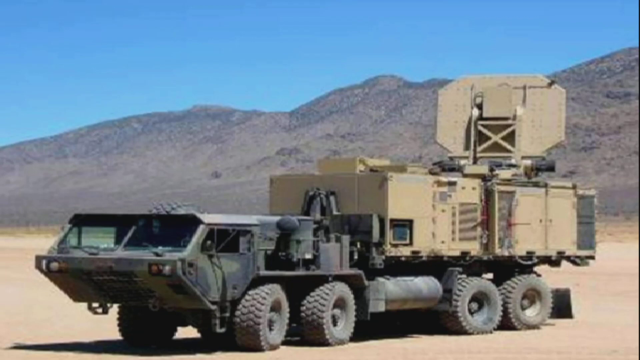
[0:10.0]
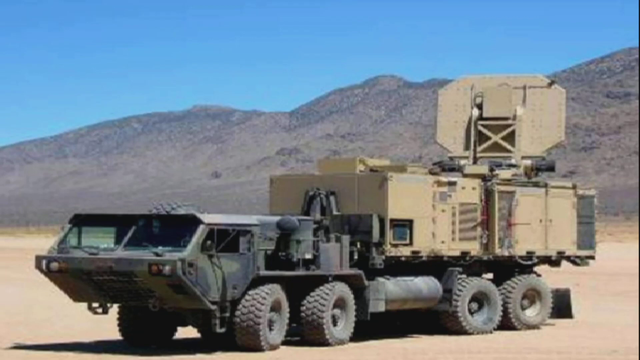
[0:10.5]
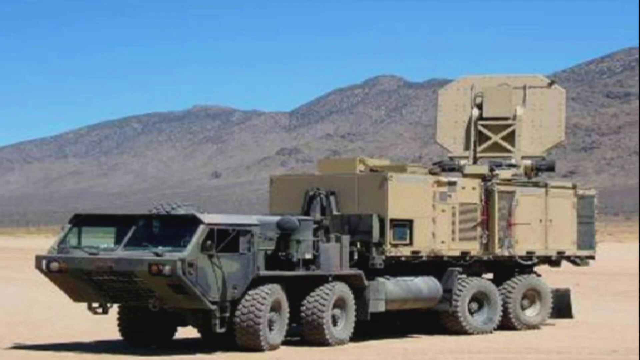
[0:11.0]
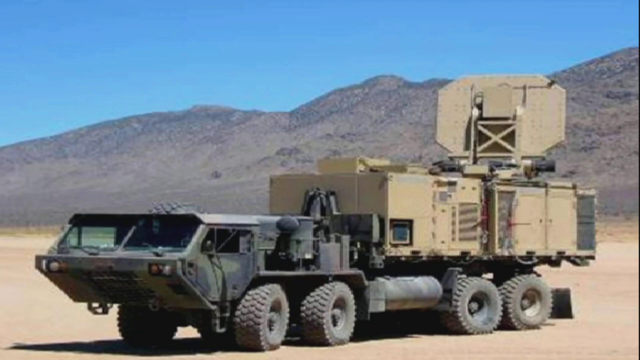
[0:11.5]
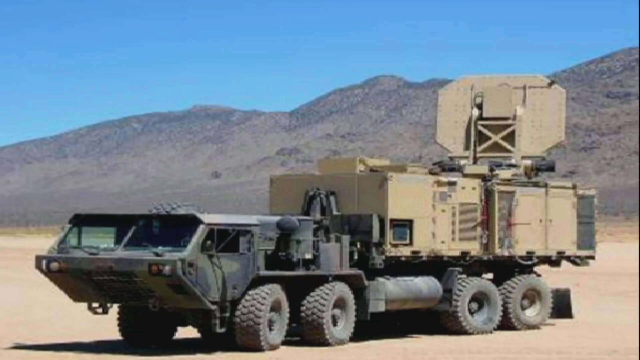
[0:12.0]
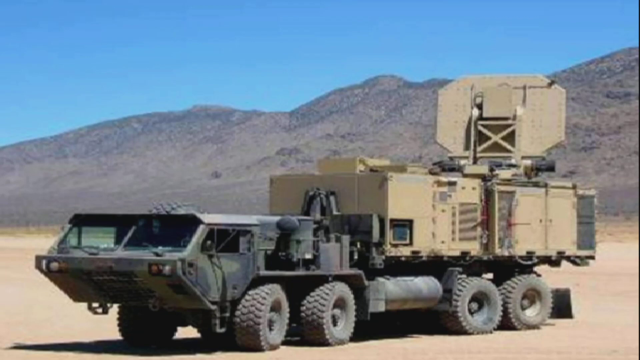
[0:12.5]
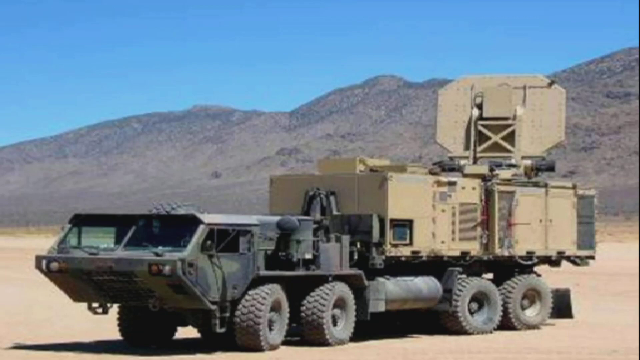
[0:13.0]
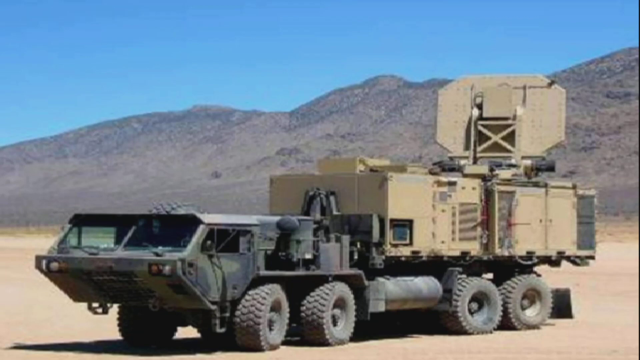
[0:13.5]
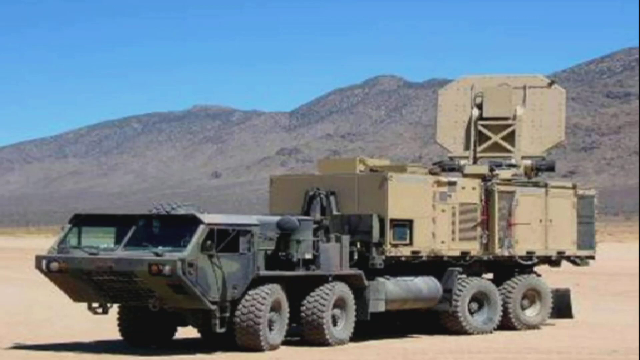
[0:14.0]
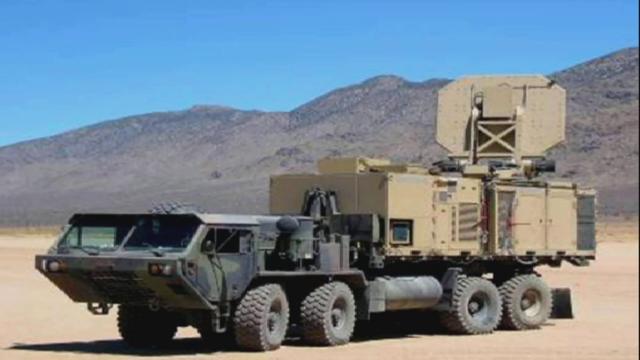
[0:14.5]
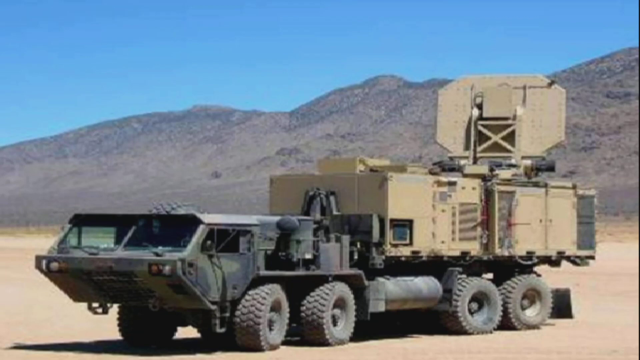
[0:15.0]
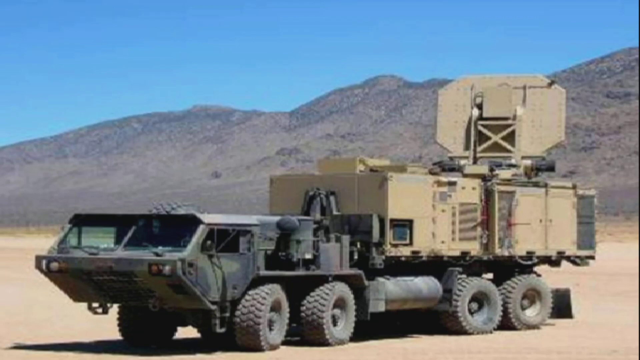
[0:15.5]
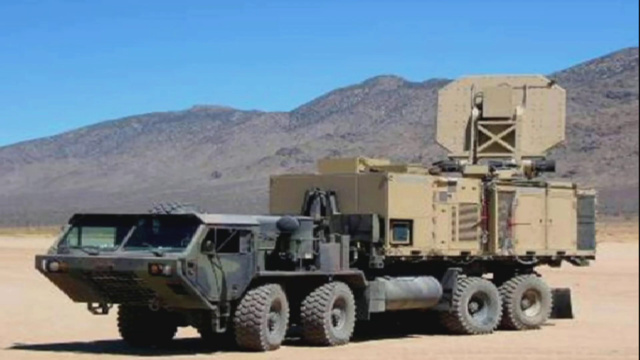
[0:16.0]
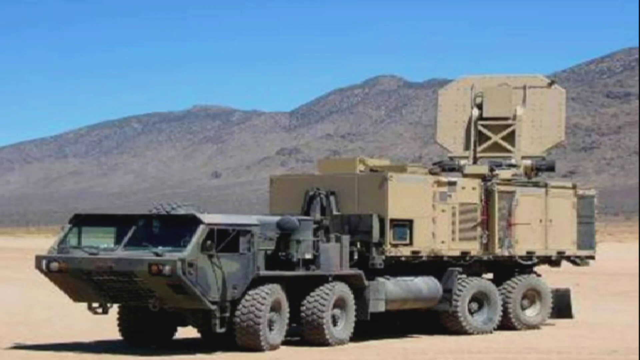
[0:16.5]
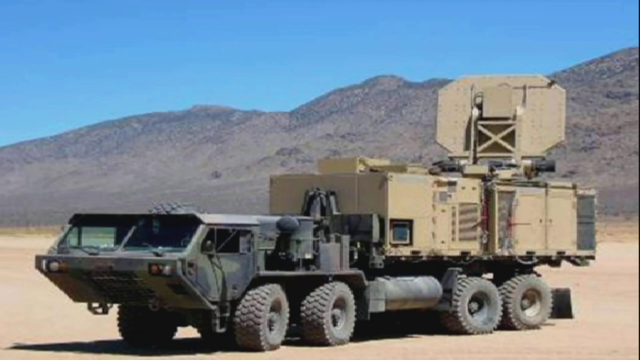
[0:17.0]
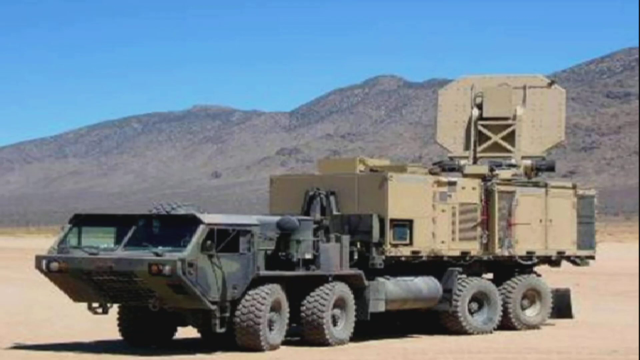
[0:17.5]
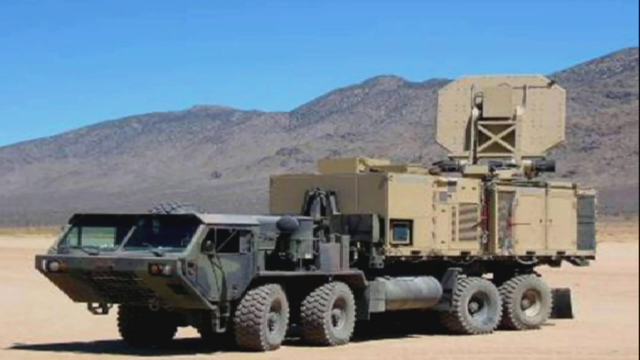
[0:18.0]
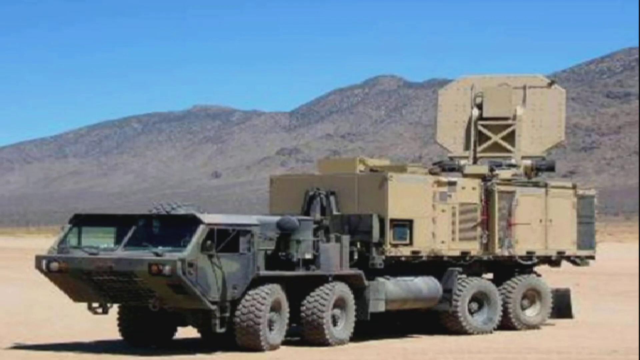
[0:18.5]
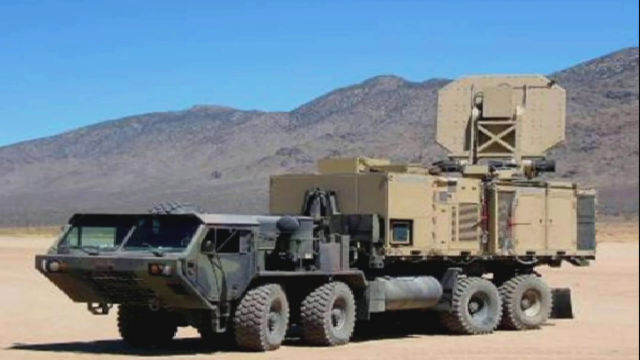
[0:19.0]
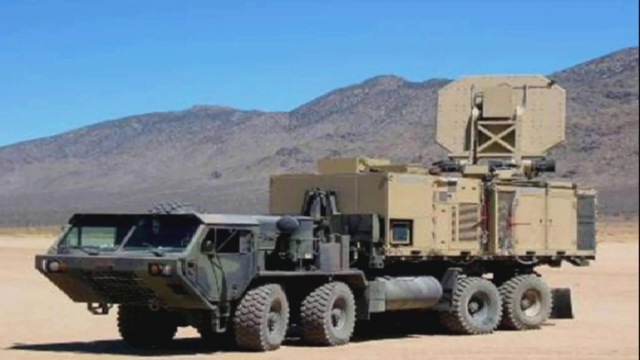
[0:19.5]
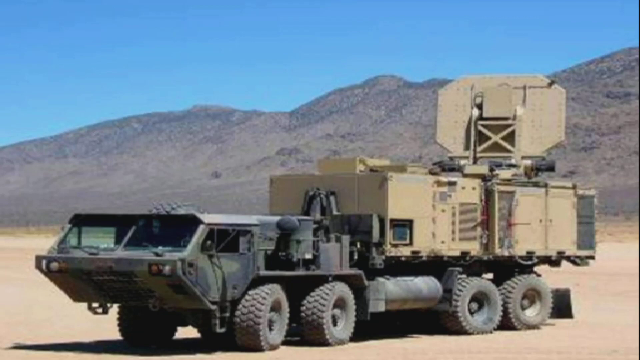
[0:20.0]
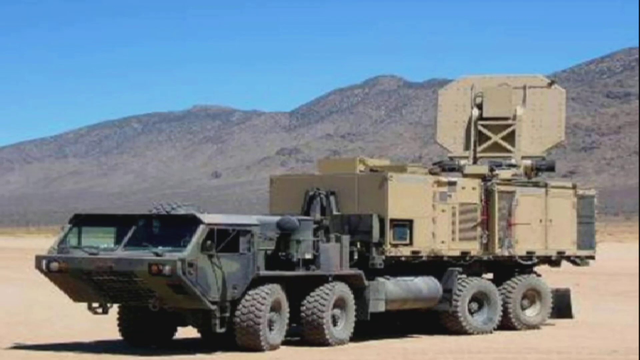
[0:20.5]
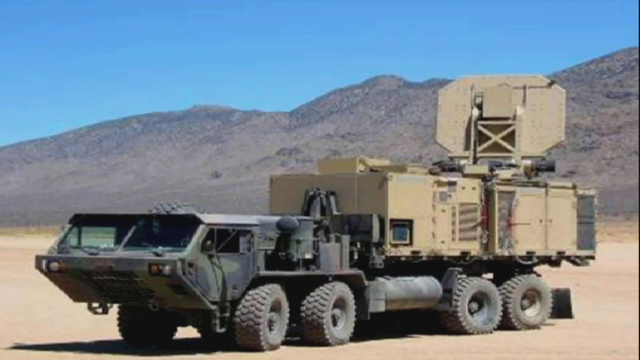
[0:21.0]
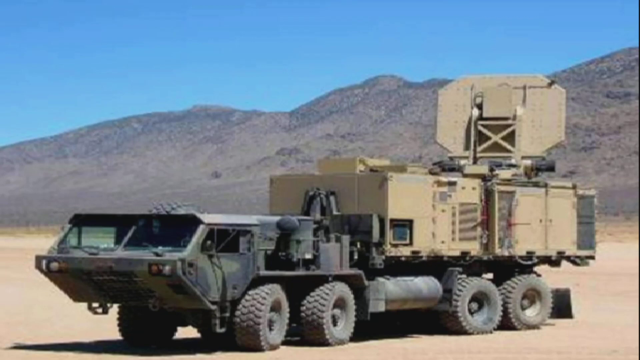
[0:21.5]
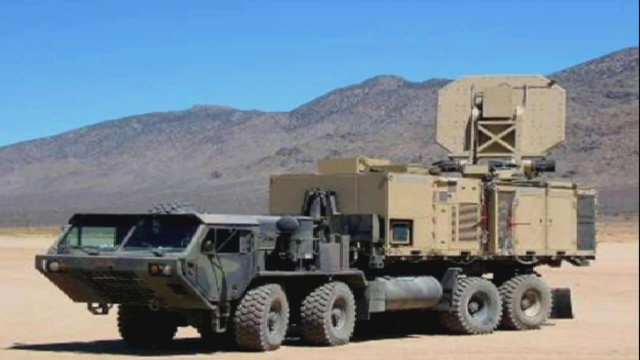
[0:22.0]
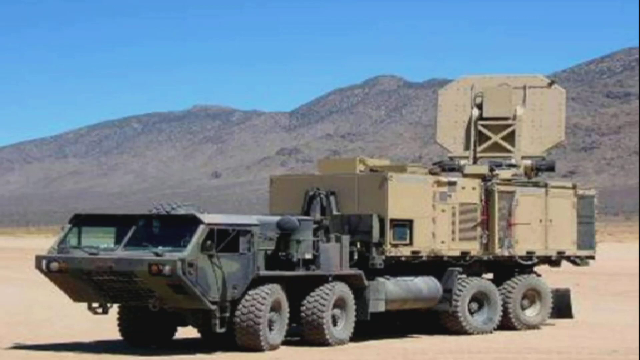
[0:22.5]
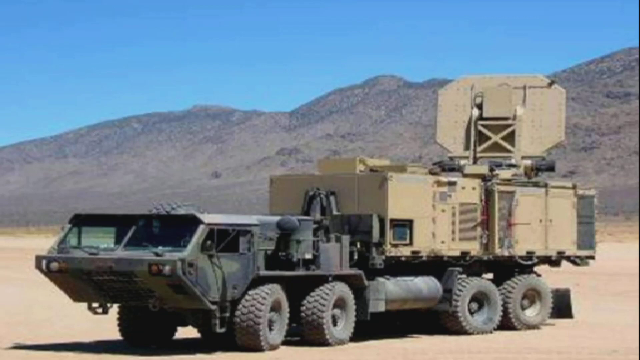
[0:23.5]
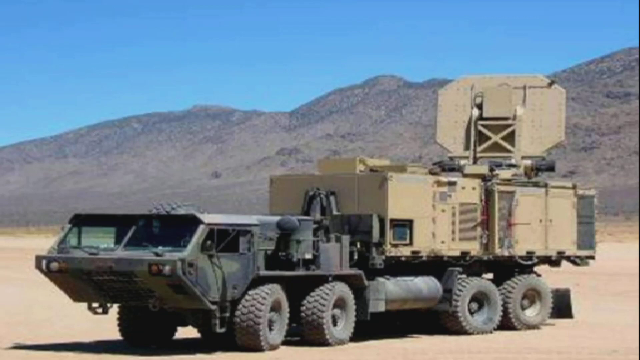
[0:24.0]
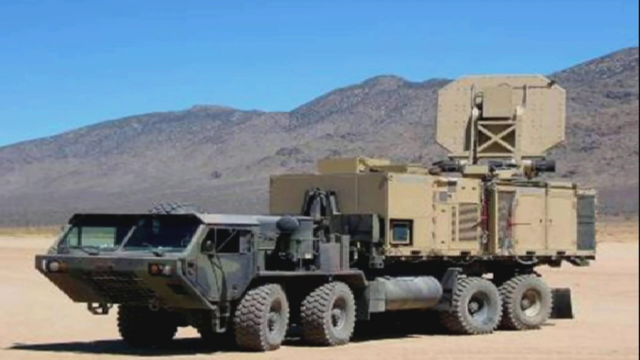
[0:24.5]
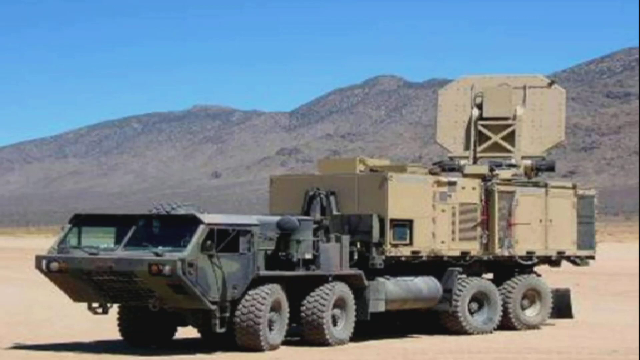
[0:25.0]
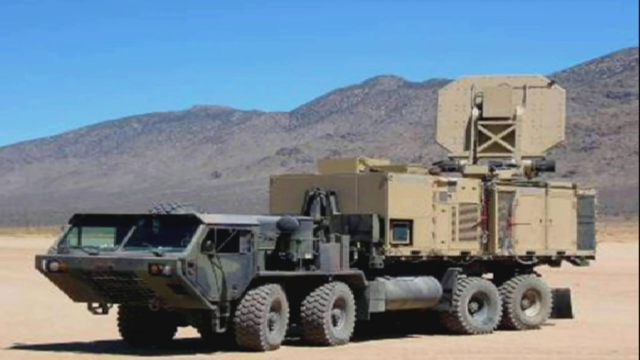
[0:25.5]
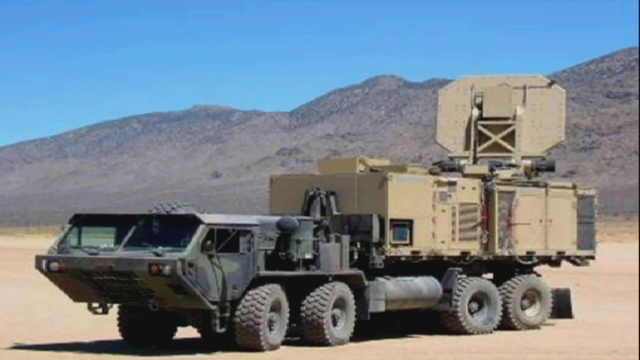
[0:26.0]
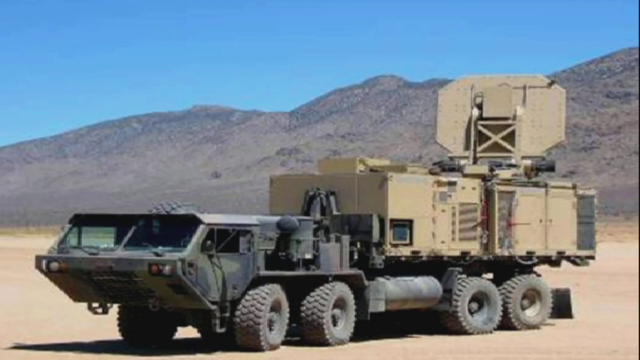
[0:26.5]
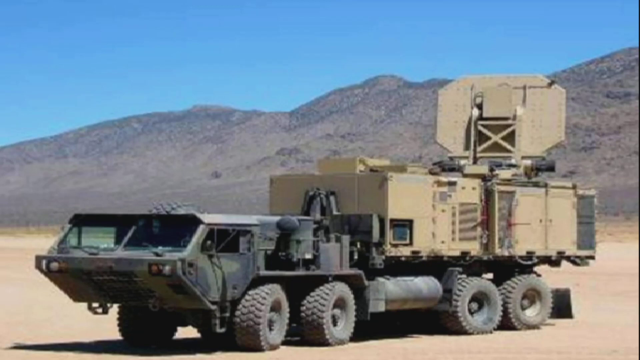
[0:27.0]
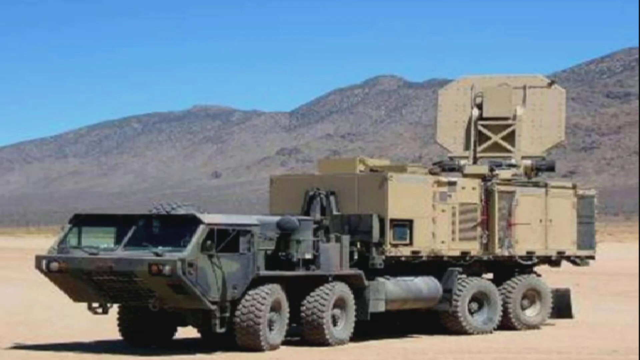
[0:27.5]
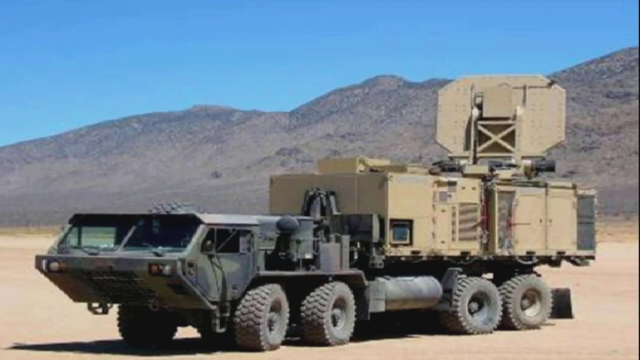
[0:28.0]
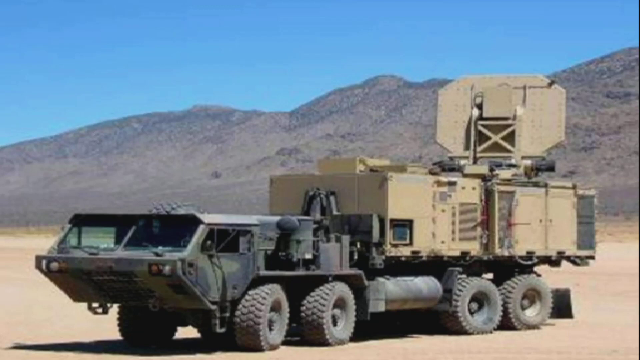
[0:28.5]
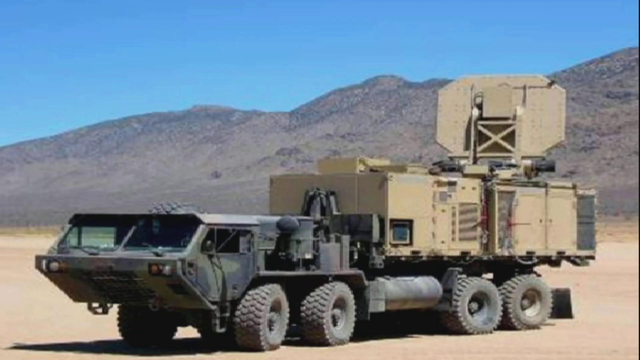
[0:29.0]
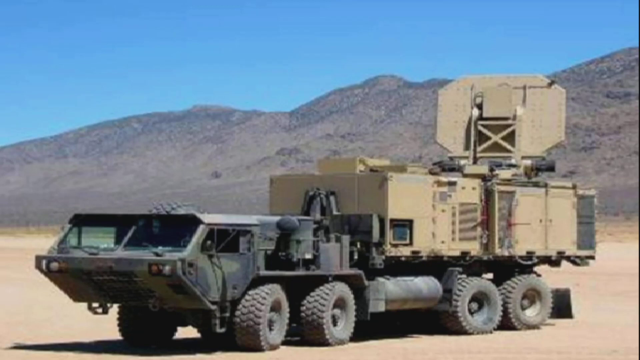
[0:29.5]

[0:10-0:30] A very big soldiers' truck is displayed, parked in a desert with big mountains behind it. It has very big wheels, its front is fully covered with a lot of metal things, and it is open at the back. No one is inside it; it is just parked outside in the desert area with a mountain behind.